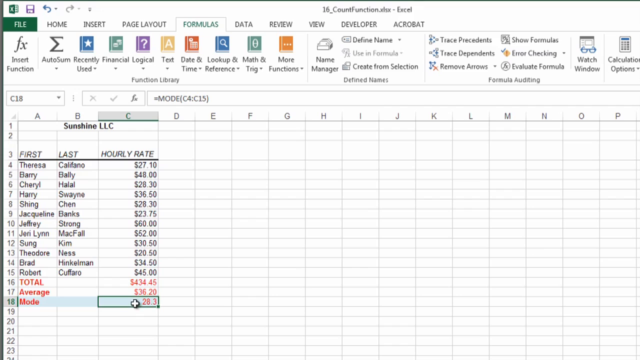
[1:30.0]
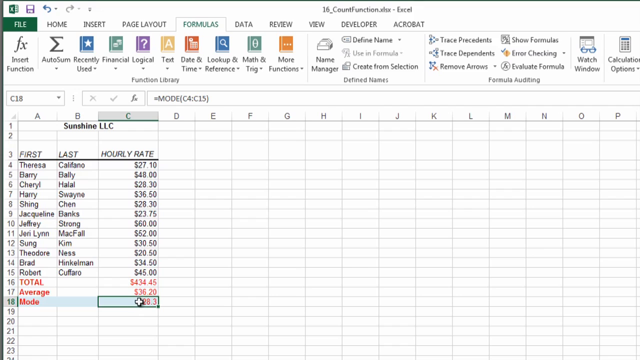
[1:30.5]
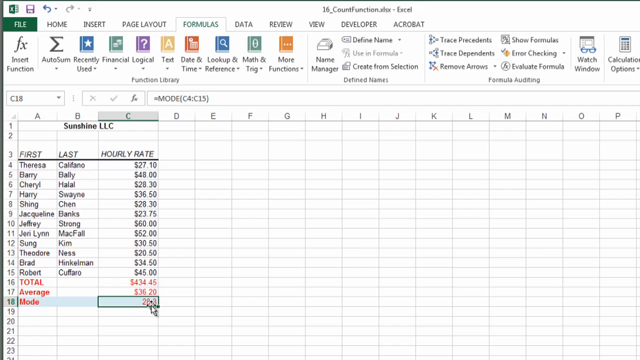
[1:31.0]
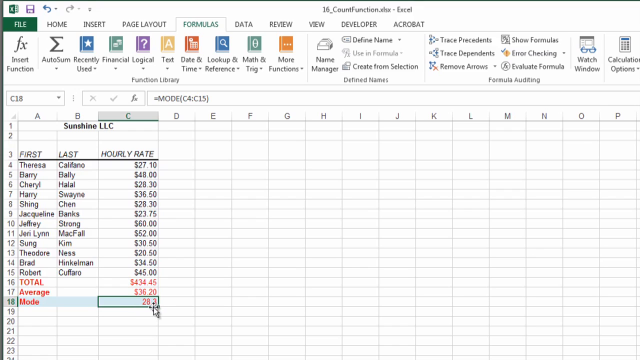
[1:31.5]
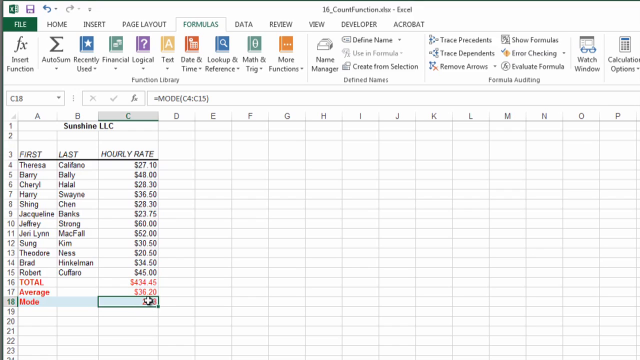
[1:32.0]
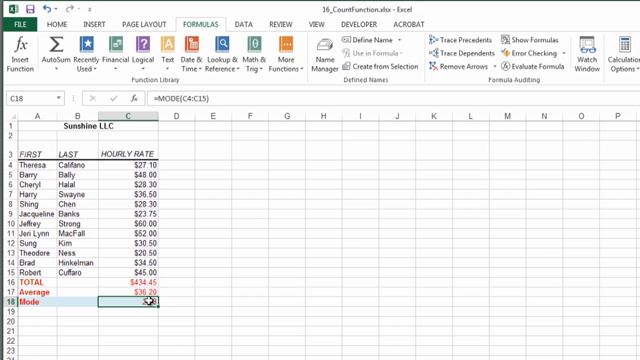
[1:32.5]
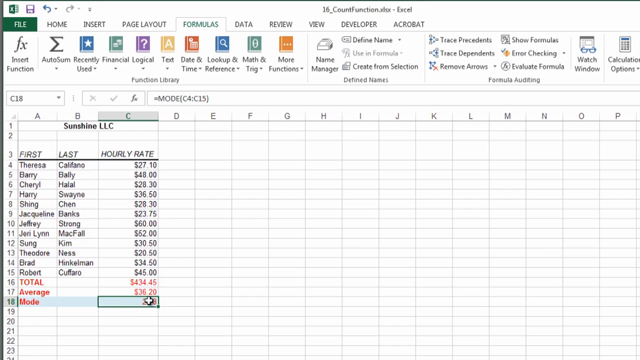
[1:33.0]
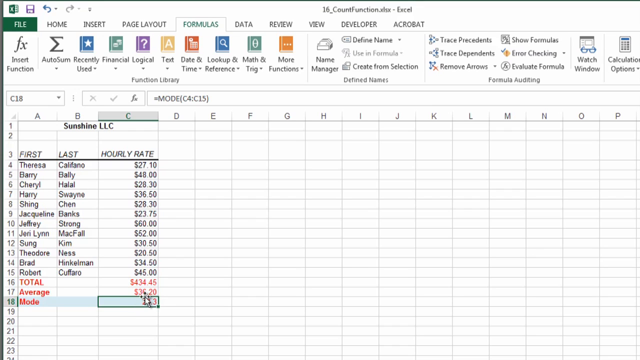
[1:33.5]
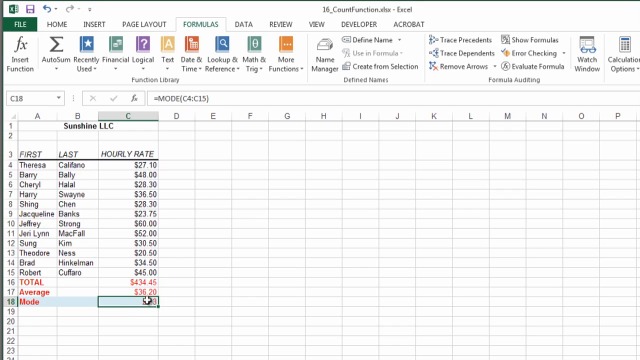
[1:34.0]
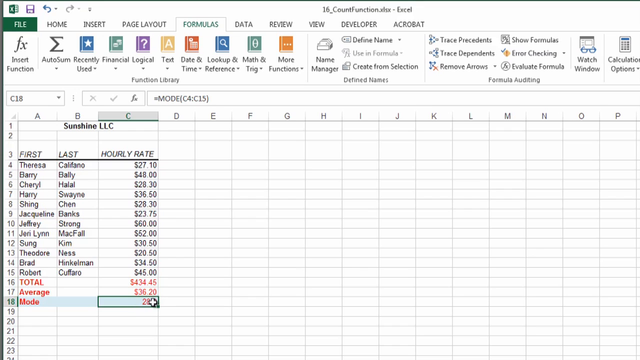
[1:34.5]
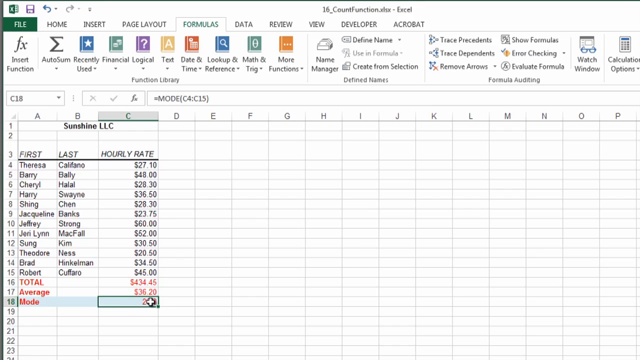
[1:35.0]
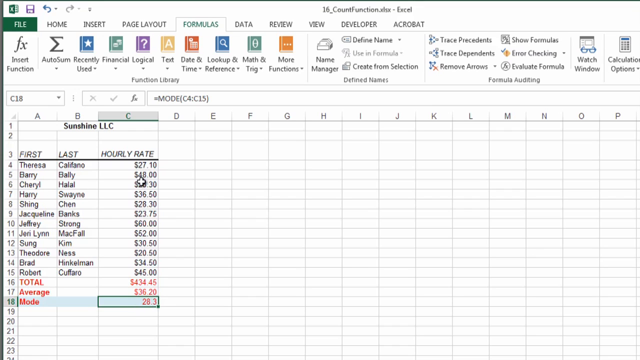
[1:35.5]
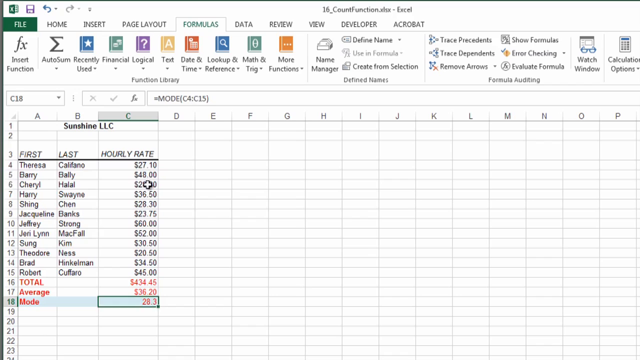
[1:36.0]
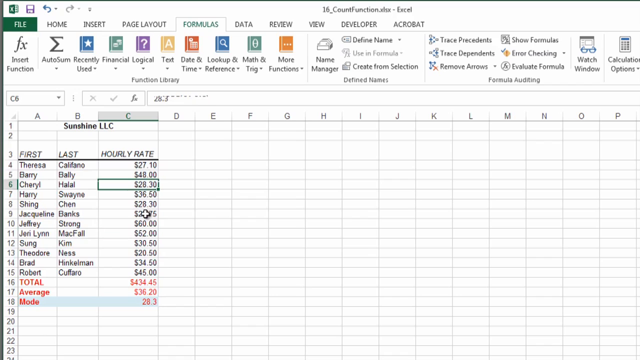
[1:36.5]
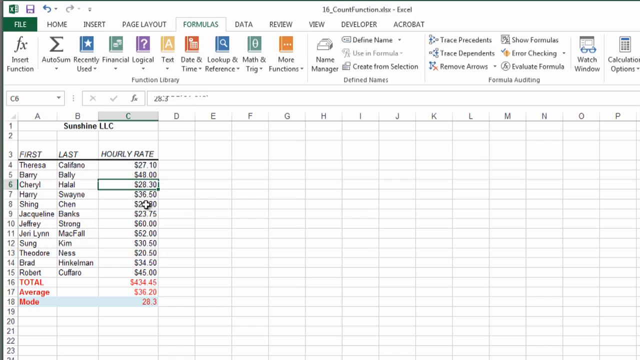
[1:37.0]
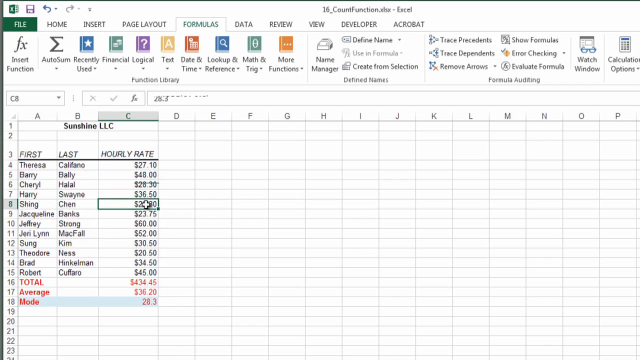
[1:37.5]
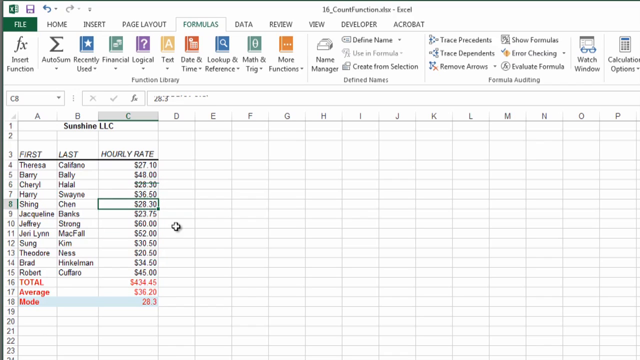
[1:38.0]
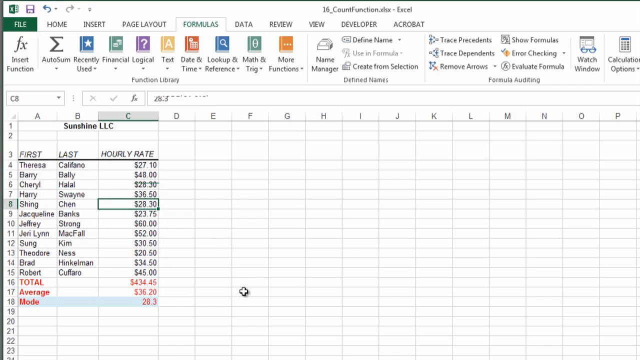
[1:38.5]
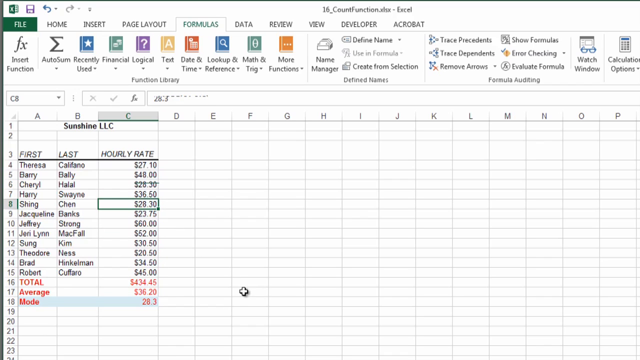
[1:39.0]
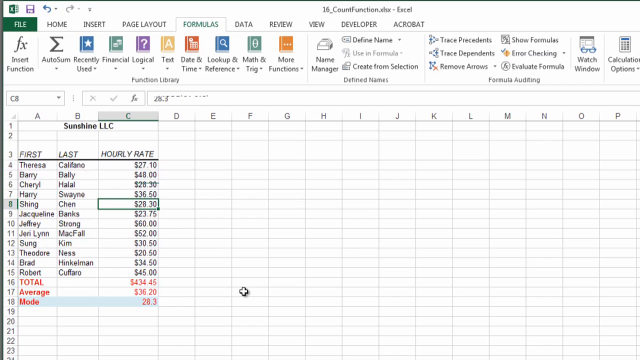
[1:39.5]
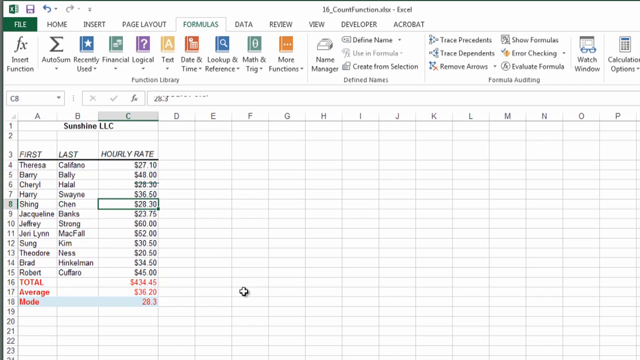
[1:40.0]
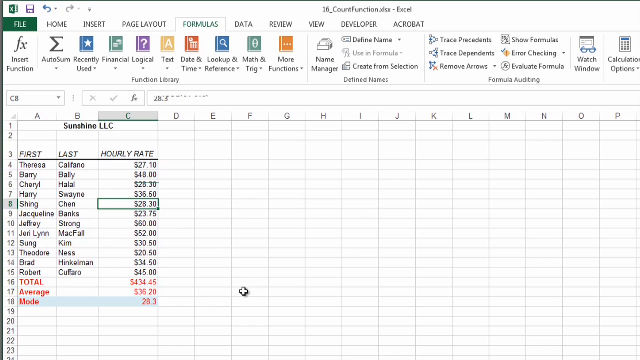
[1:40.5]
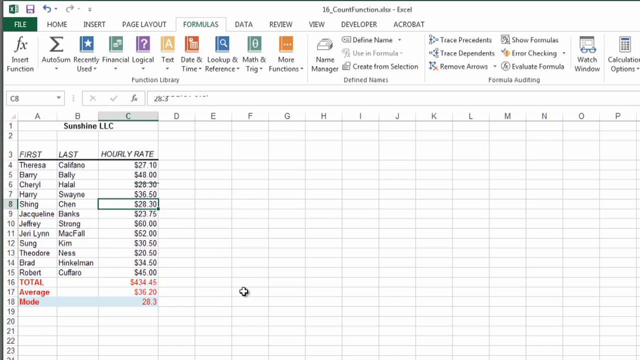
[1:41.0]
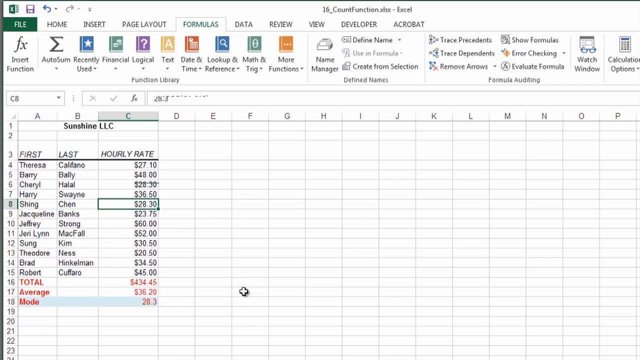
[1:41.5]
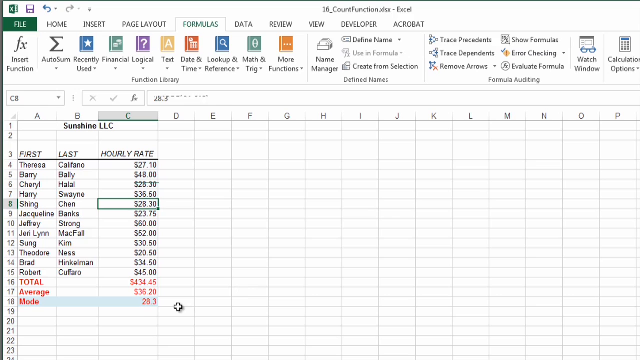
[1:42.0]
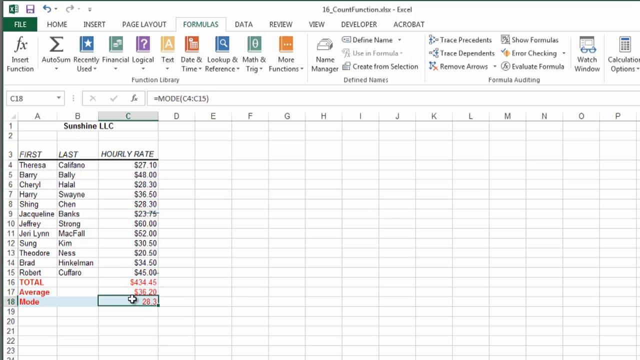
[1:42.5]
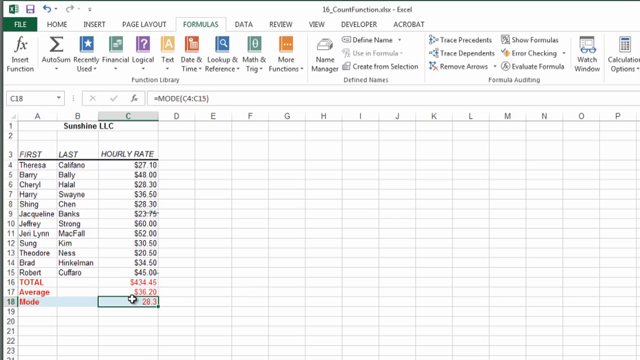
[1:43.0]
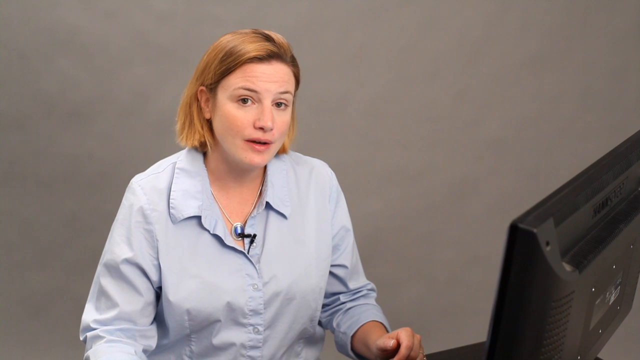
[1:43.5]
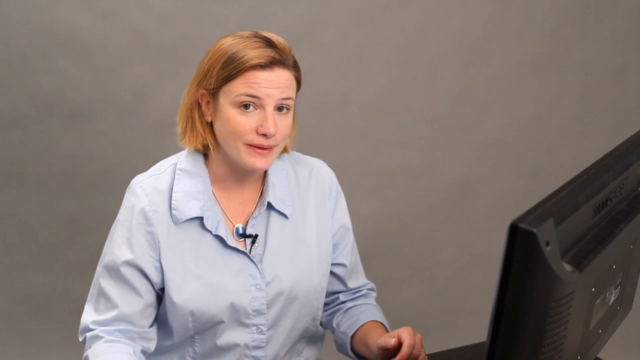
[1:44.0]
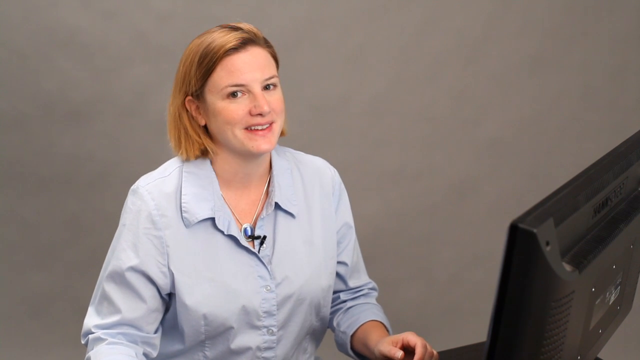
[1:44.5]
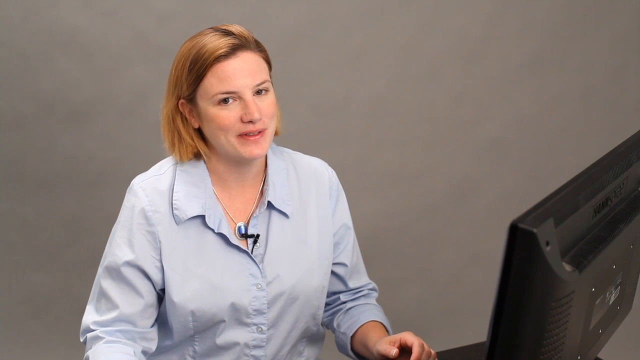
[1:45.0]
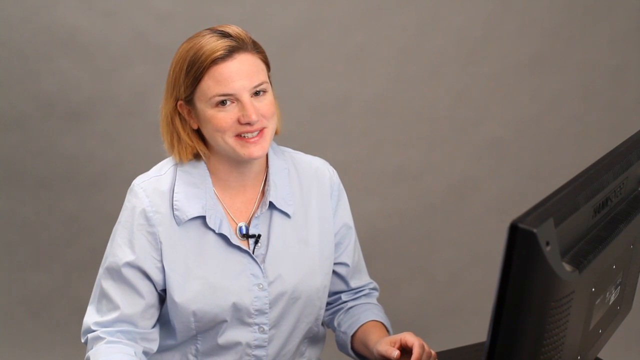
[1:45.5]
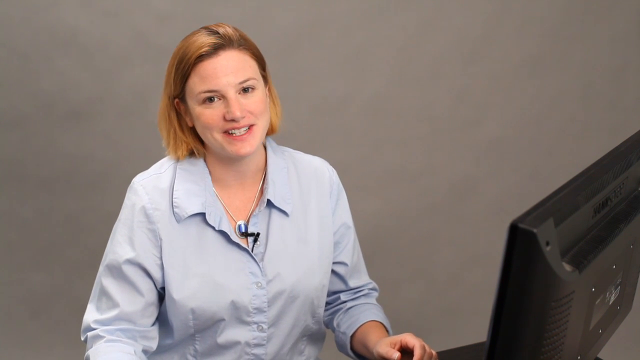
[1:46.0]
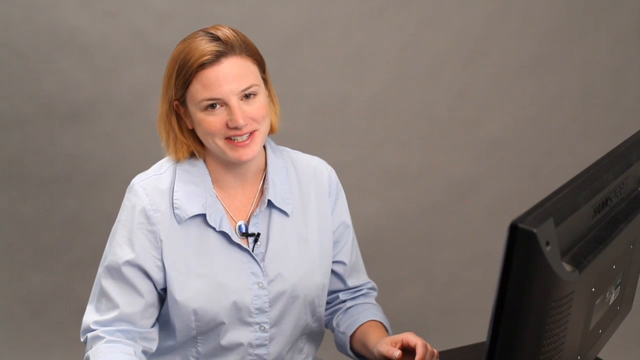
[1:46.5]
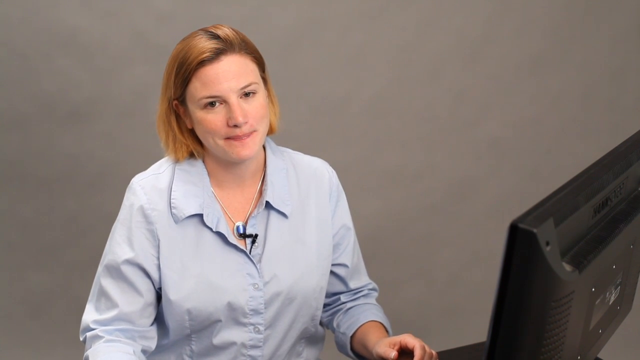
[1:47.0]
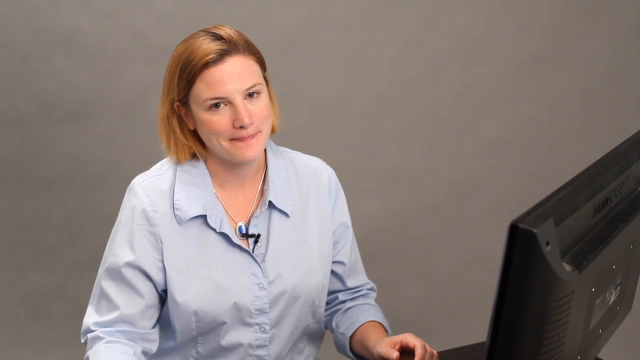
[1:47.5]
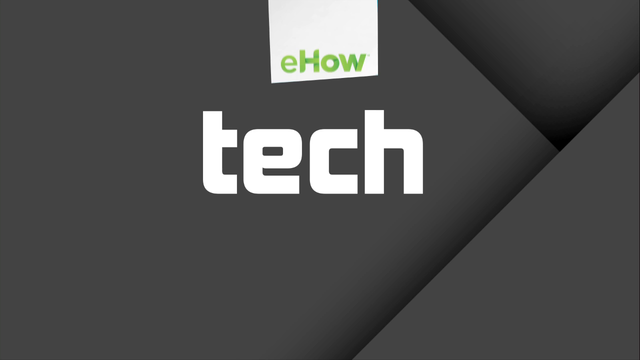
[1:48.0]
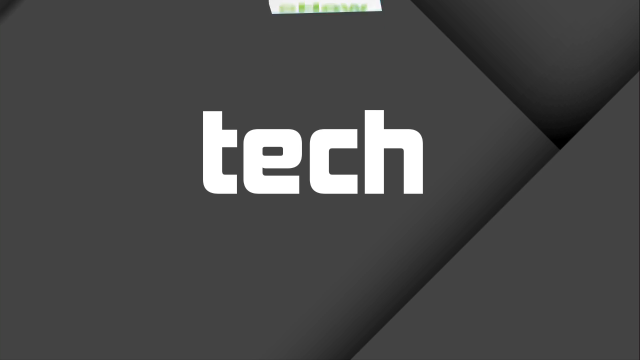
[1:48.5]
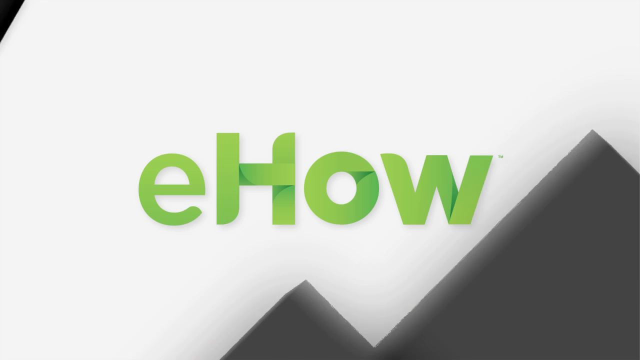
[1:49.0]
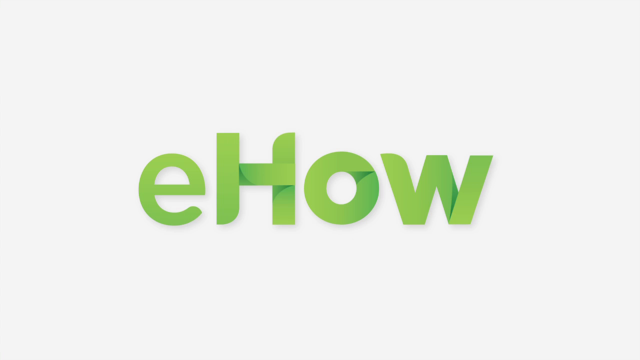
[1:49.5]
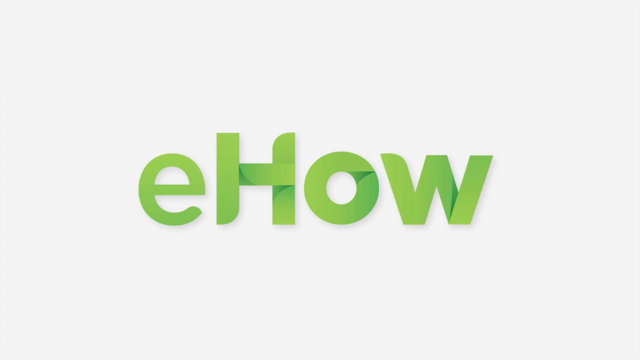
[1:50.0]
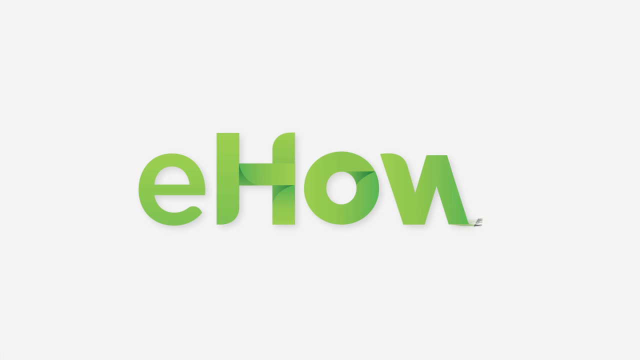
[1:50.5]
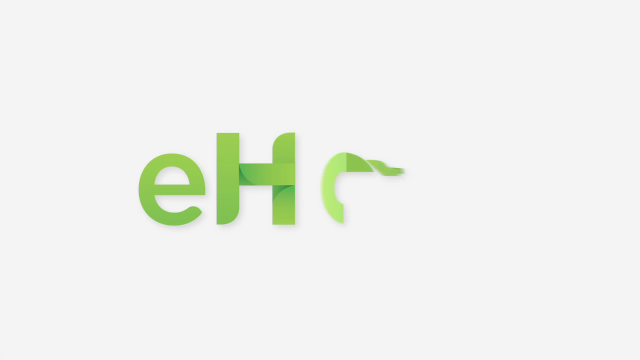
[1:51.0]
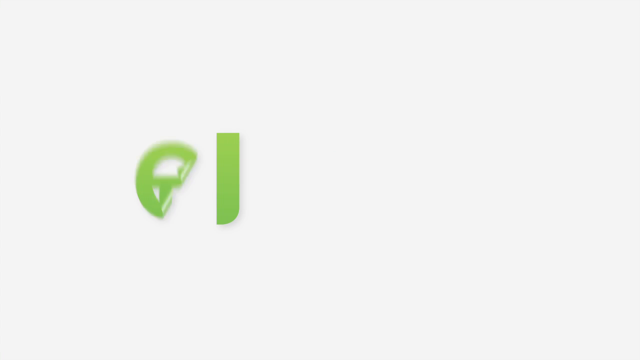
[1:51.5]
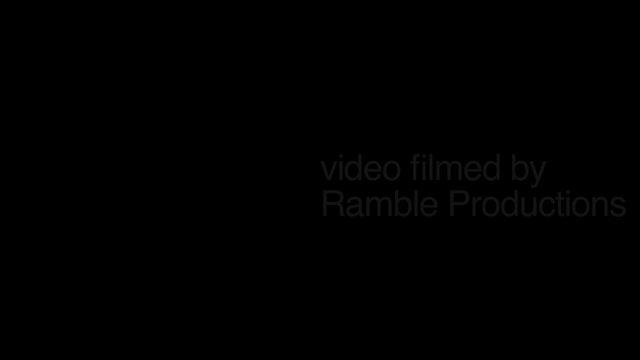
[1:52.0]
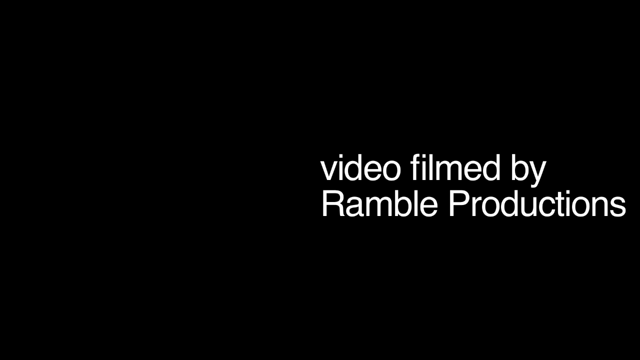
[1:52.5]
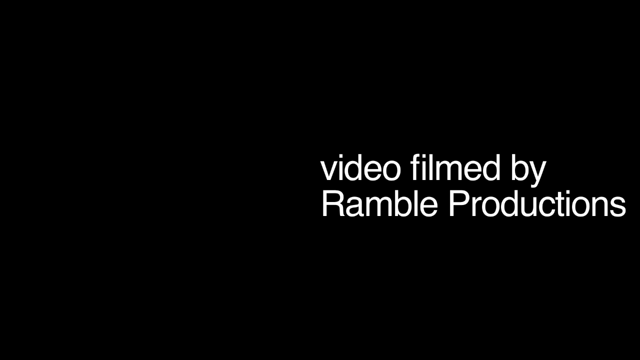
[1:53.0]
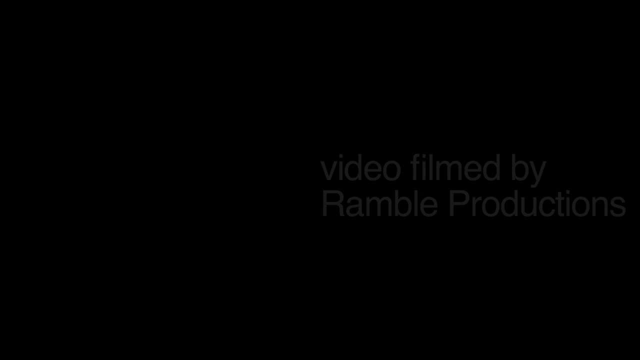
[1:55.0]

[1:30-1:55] The Excel window is shown with the spreadsheet title "16_count function.xhx" prominently displayed at the top. A cursor hovers over the value for the mode, which is in red text under the hourly rate and displays 28.3. The value is selected and surrounded by a green highlight, and the mode function can be seen in the function toolbar. The cursor then moves up and clicks the hourly rate value for Cheryl Halal, which is $28.30. The instructor then selects the value for Xing Chen, and the hourly rate shown is $28.30. The video cuts back to the instructor talking to the camera before ending with the outro.